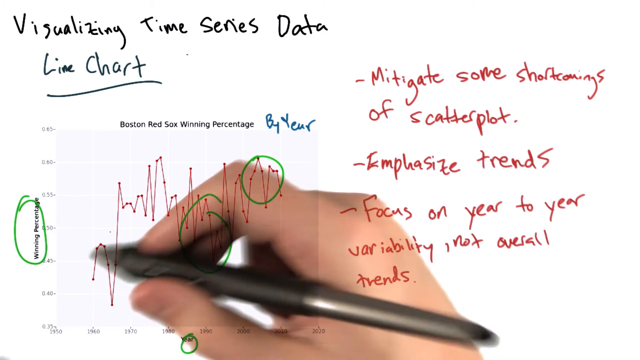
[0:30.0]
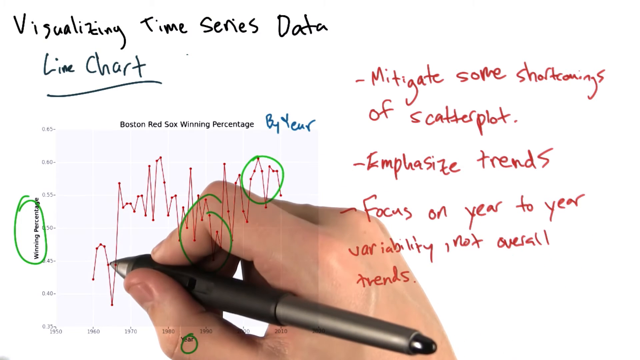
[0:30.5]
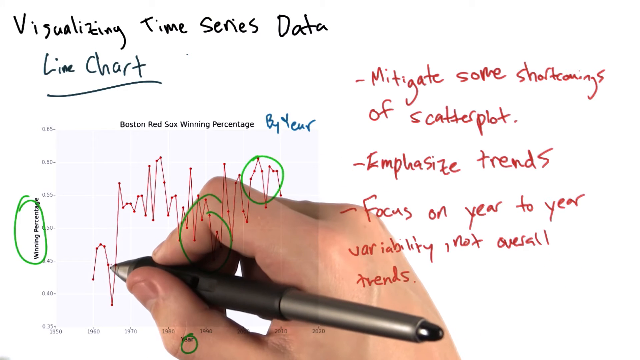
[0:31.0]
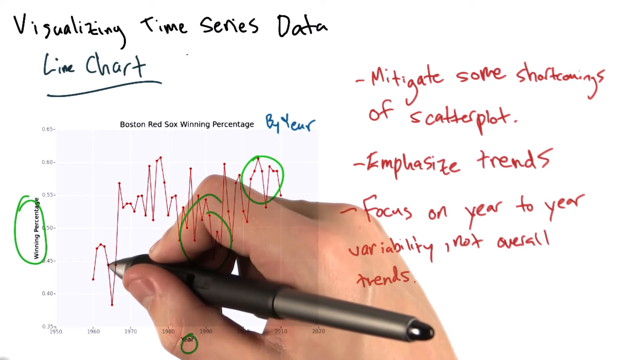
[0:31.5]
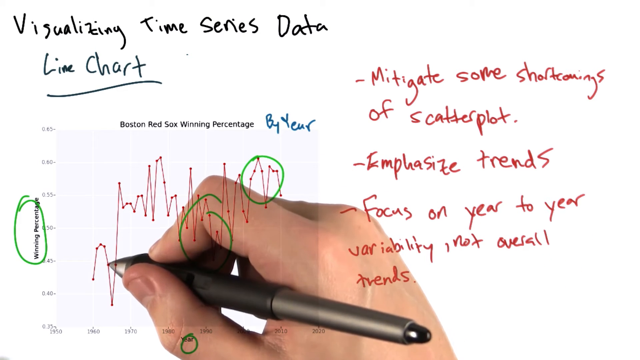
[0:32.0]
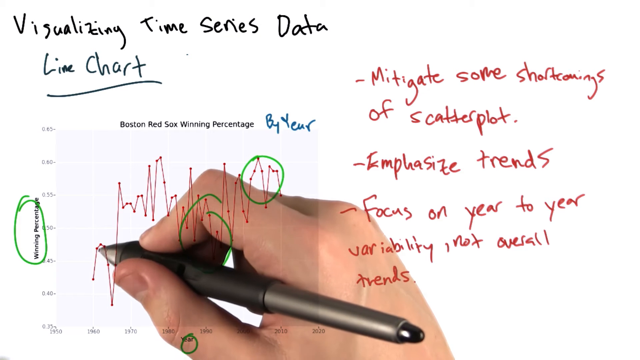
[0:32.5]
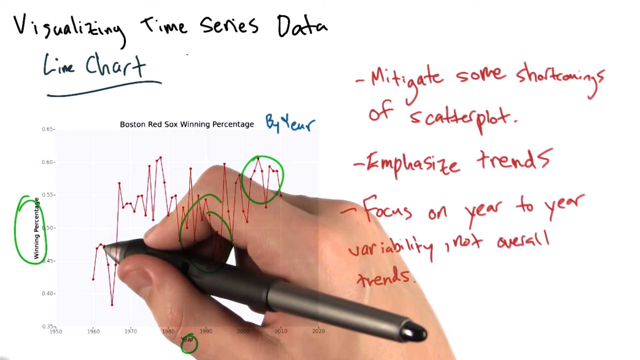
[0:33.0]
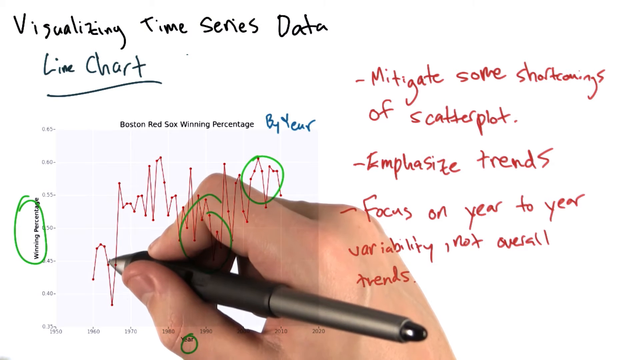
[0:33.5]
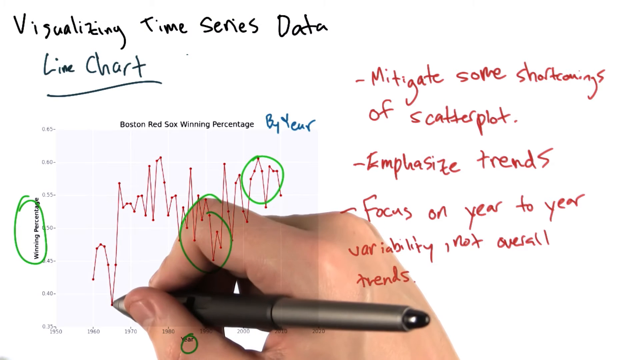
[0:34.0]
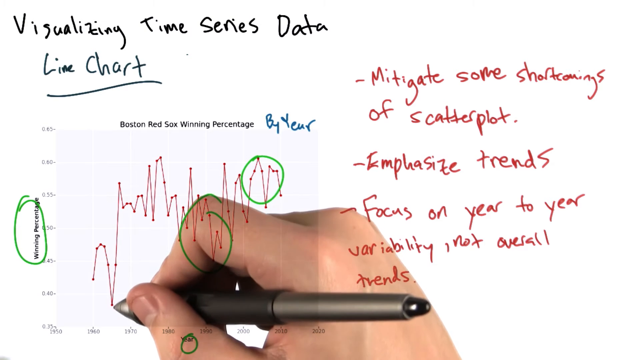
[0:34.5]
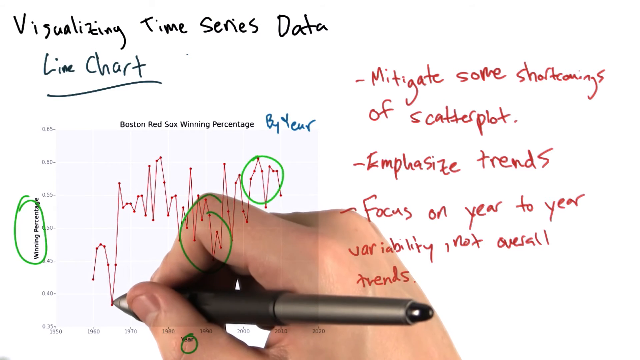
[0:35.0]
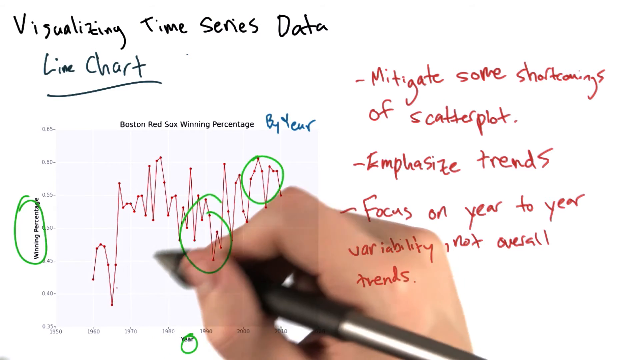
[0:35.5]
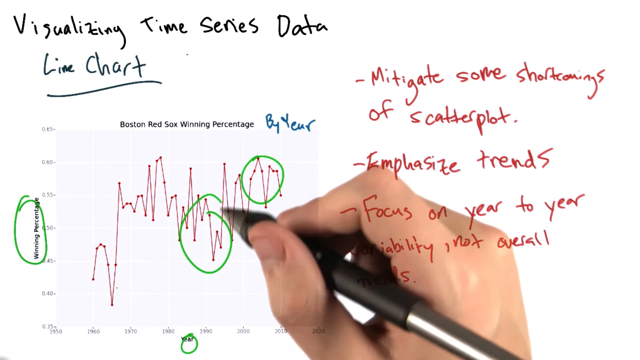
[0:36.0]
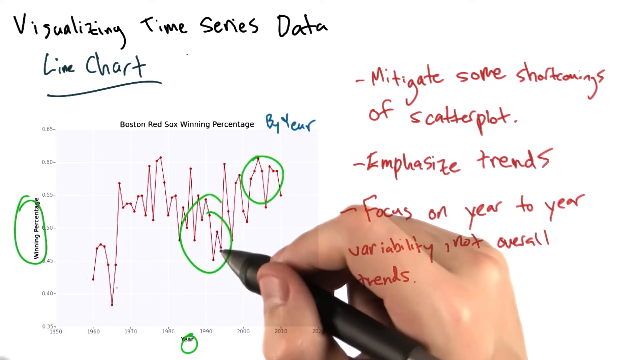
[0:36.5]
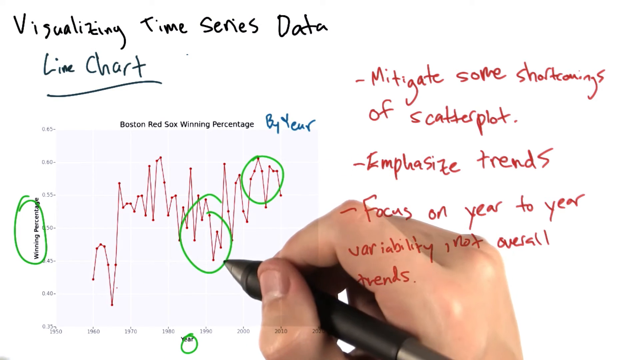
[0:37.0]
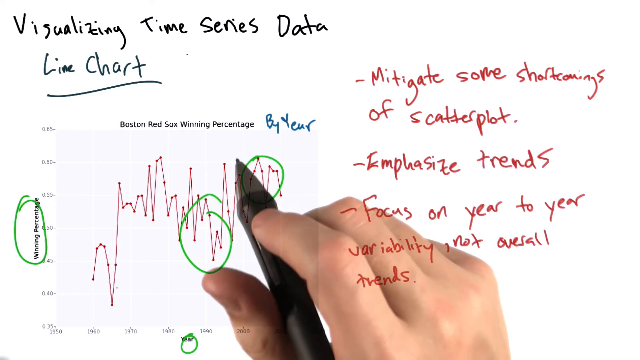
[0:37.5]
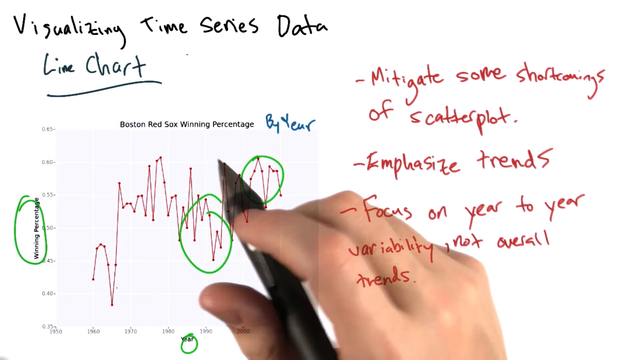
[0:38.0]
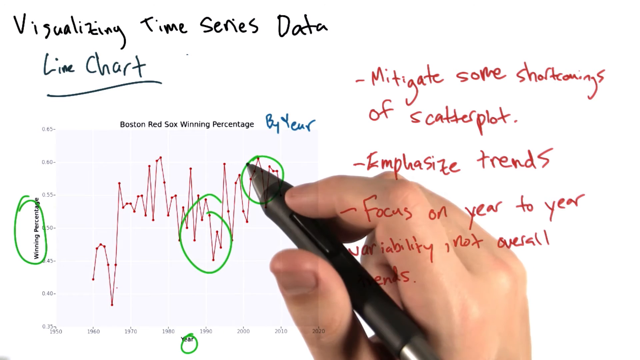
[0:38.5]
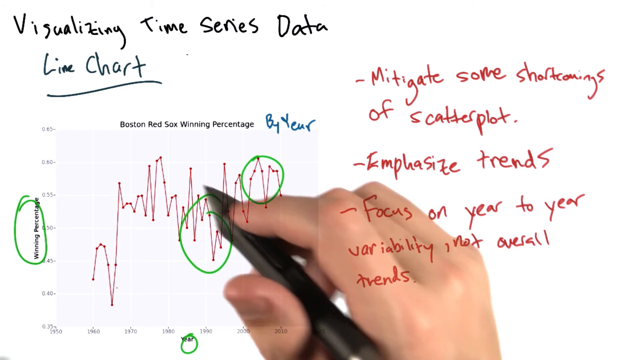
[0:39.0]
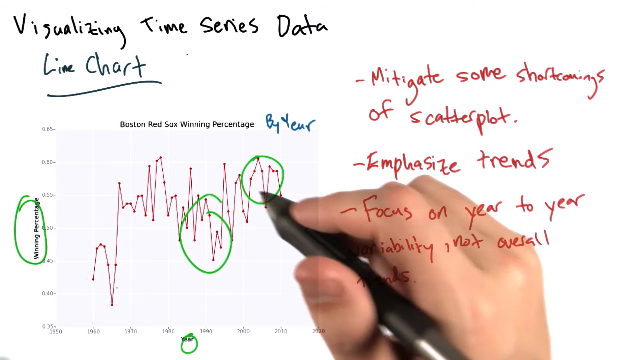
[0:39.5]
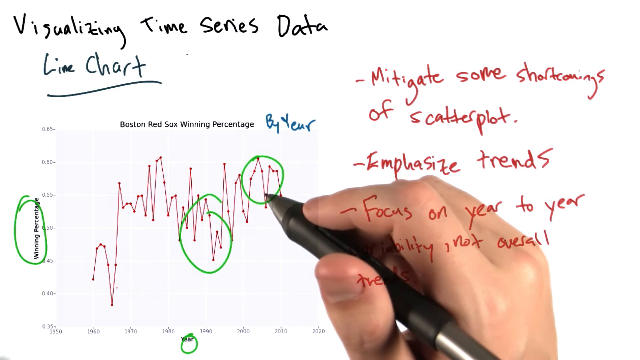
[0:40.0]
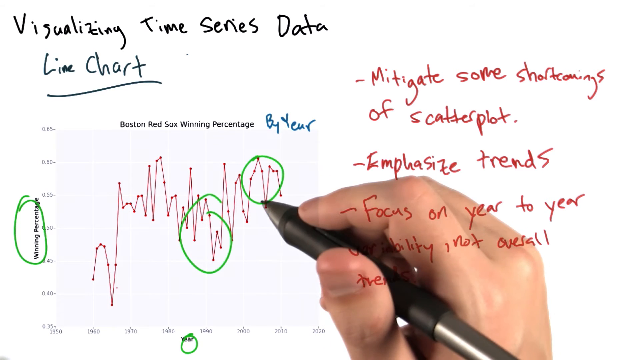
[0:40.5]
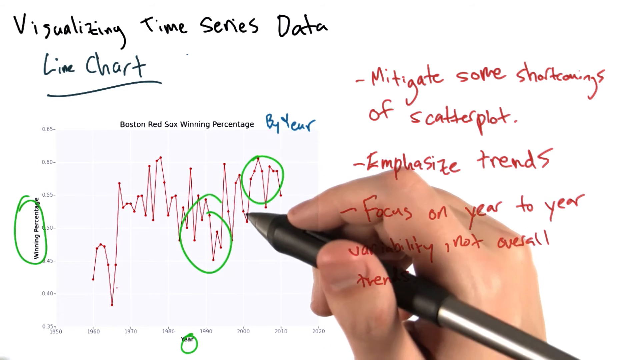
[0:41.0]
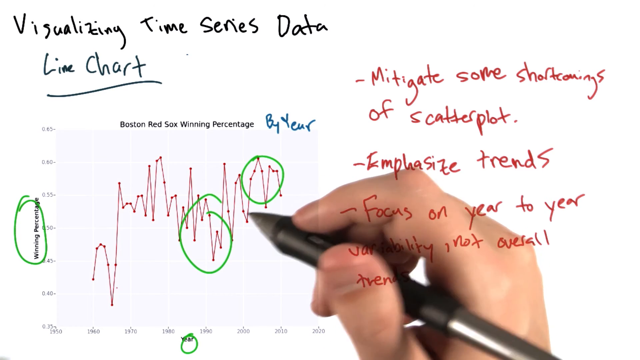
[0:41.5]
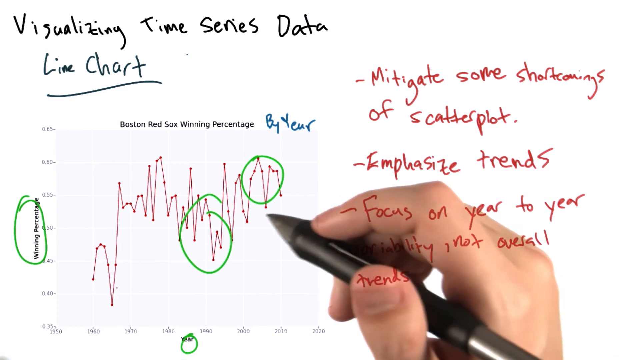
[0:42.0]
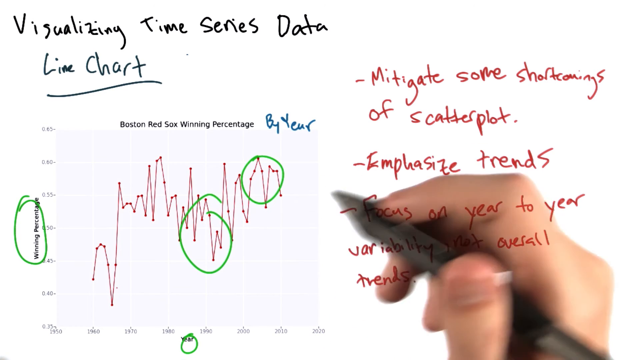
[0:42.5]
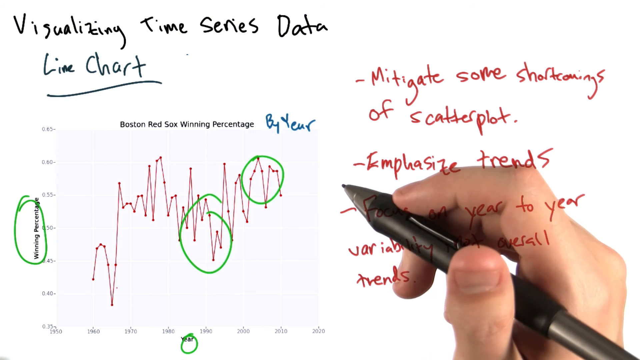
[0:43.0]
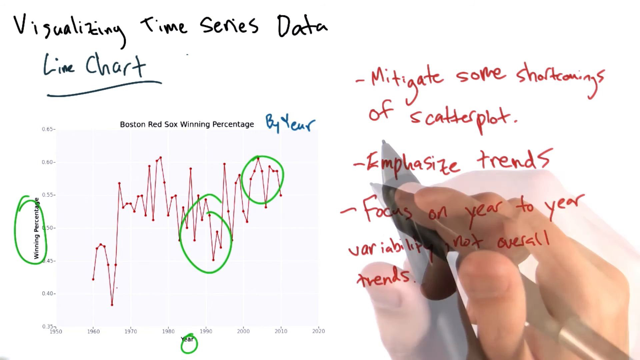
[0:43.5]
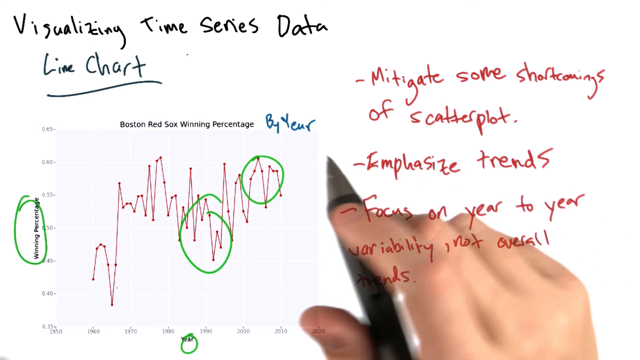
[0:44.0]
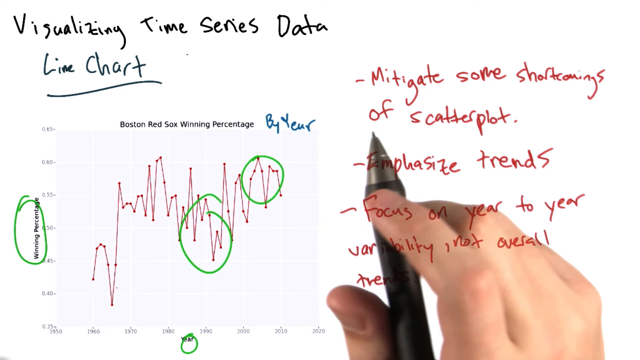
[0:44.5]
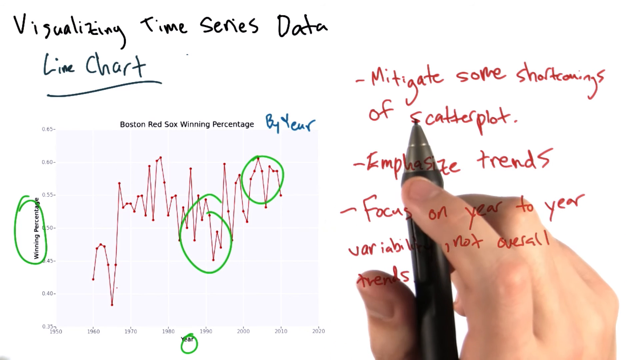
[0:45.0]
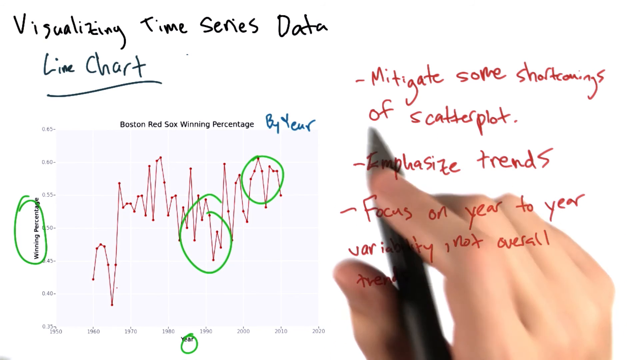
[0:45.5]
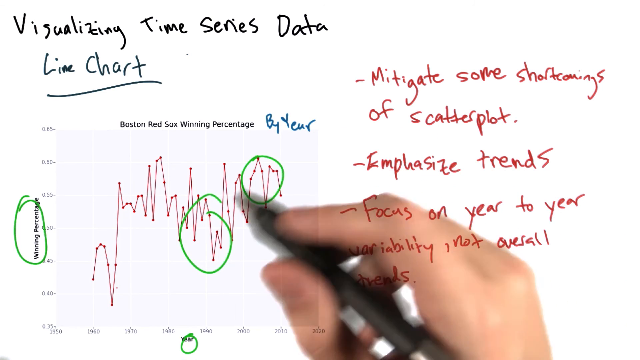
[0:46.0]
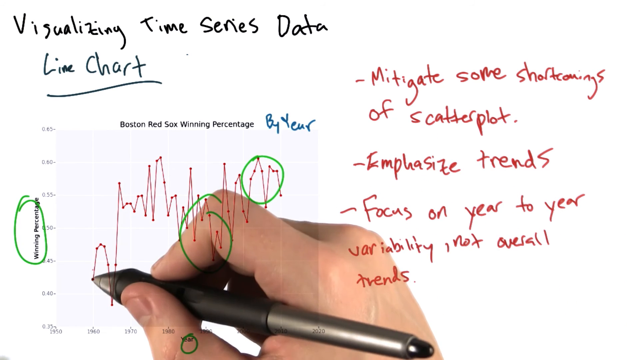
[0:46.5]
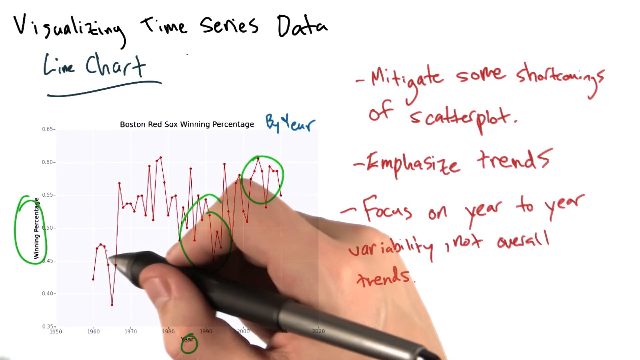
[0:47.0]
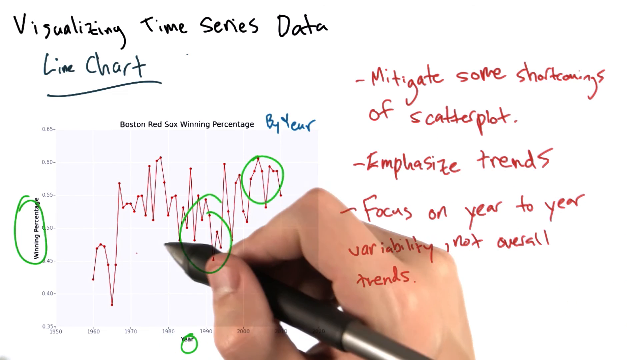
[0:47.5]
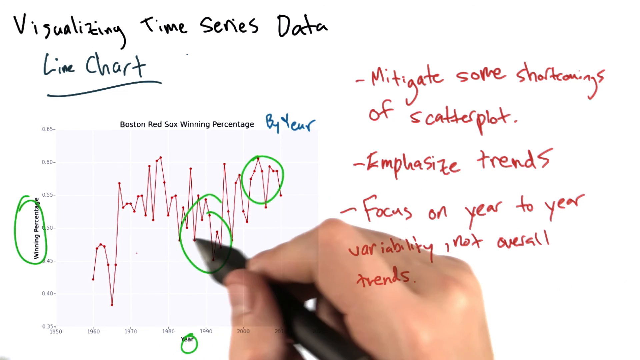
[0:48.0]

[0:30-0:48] All of the markings are on the screen: "visualizing time series data" in black at the top left, and underneath it "line chart" with a line underneath. There is a chart of the Boston Red Sox winning percentage, with the chart lines in red. Off to the left is "winning percentage," circled in green, and beside the Boston Red Sox winning percentage it says "by year" in blue. Off to the right it says "mitigate some shortcomings of scatterplot" and "emphasize trends," and underneath this, "focus on year-to-year variability, not overall trends," all in red. The person's hand moves along the screen with a thicker black digital pen, as if possibly circling something or drawing lines, but nothing shows up on the screen.